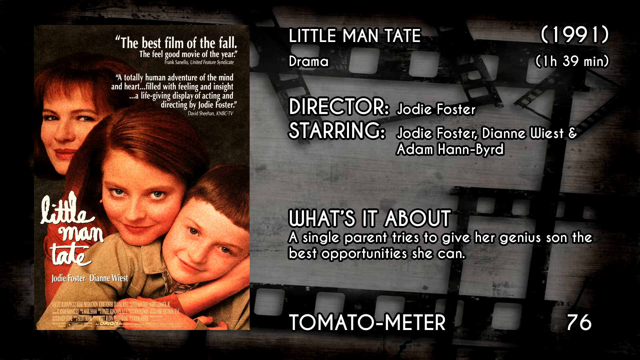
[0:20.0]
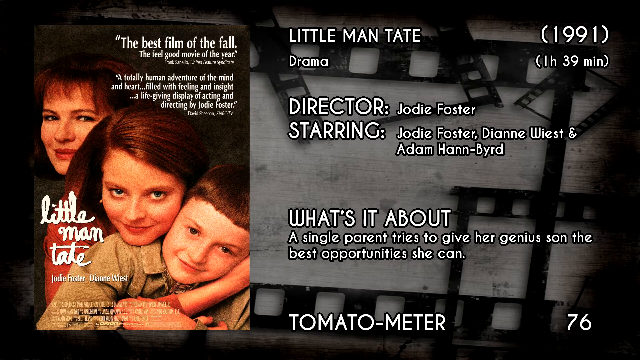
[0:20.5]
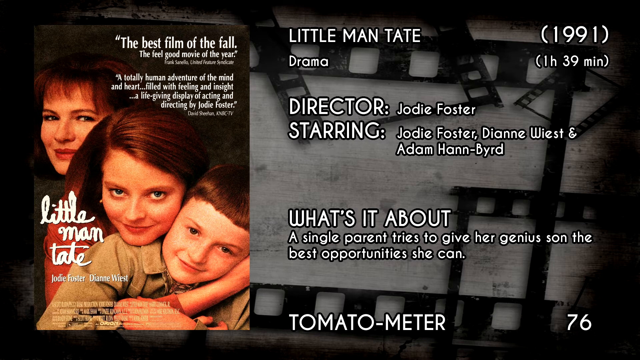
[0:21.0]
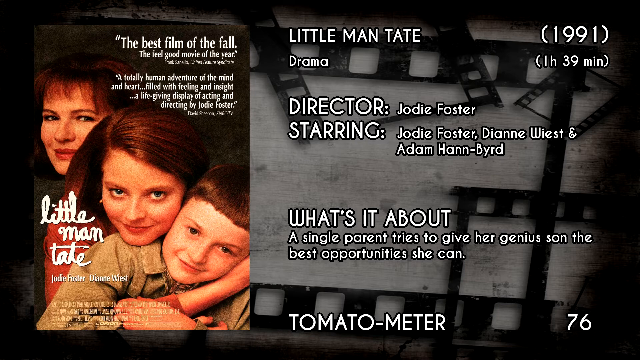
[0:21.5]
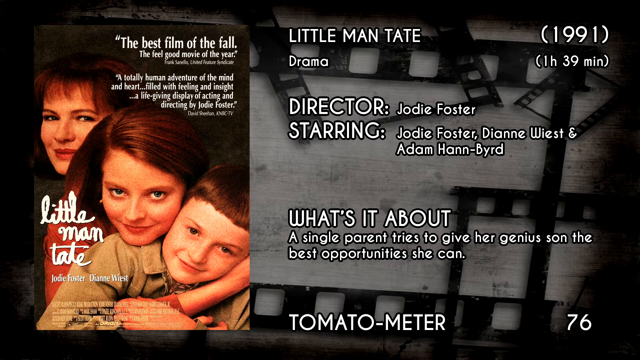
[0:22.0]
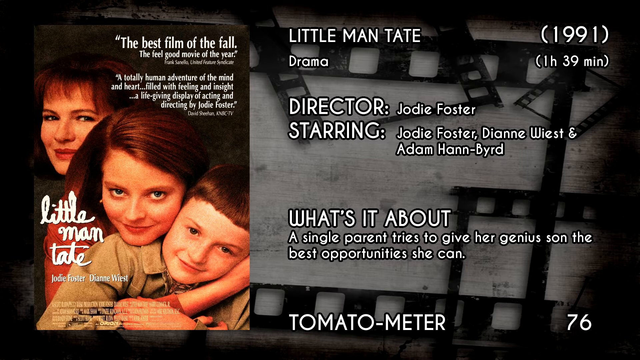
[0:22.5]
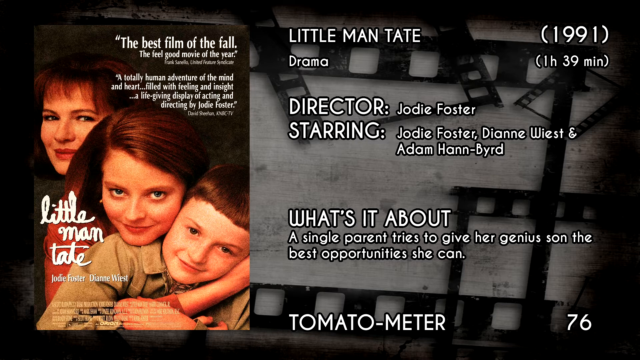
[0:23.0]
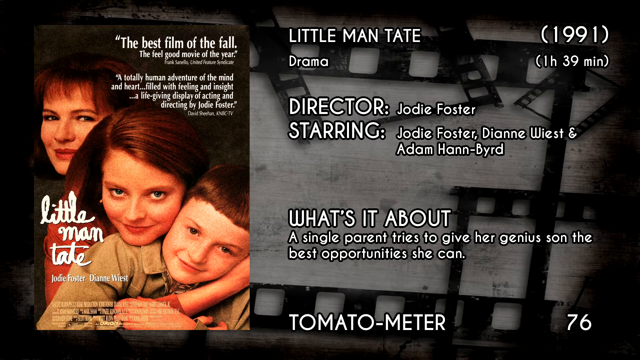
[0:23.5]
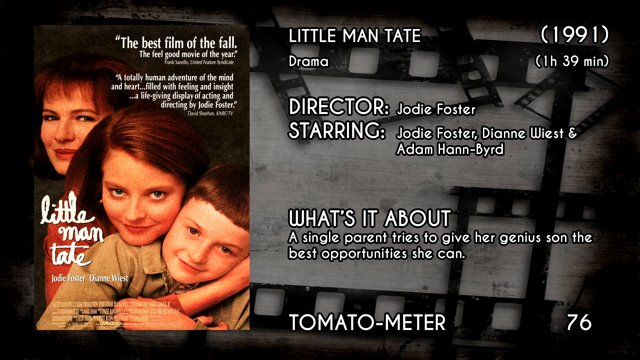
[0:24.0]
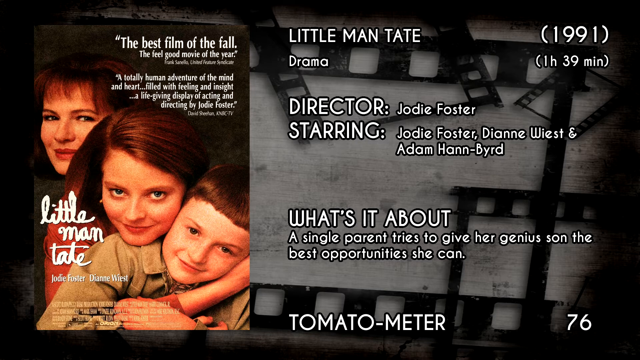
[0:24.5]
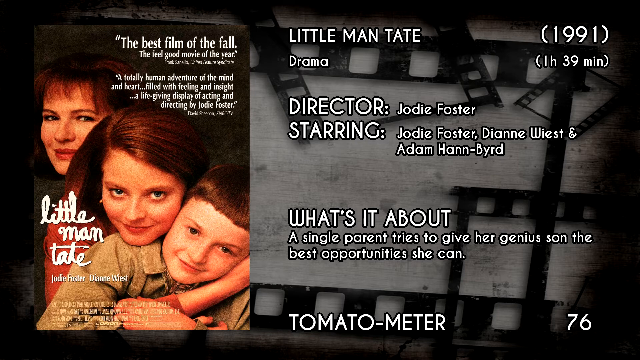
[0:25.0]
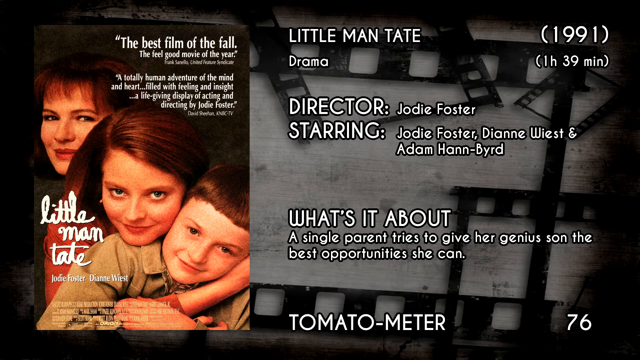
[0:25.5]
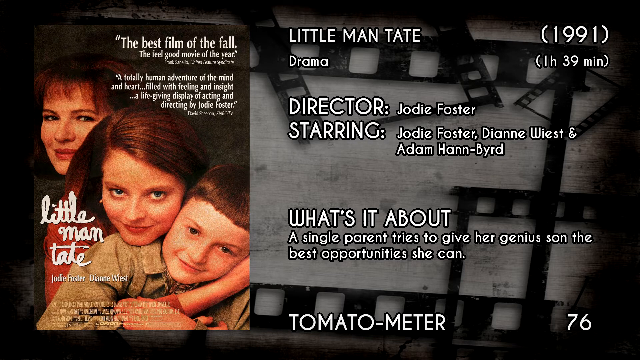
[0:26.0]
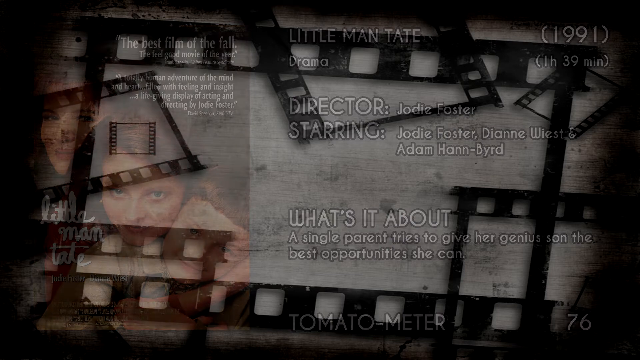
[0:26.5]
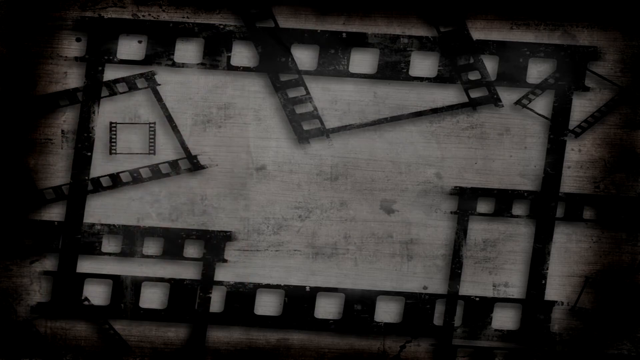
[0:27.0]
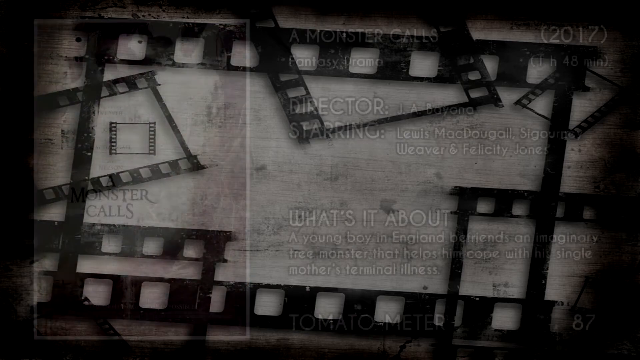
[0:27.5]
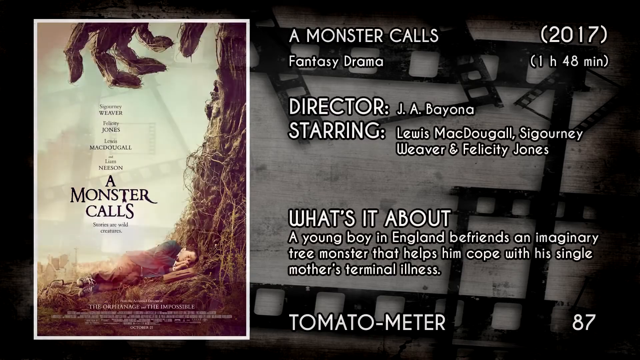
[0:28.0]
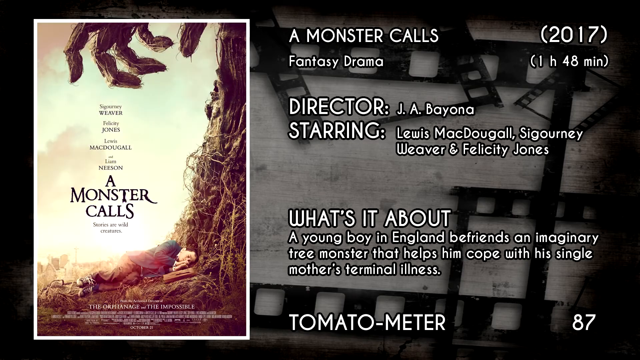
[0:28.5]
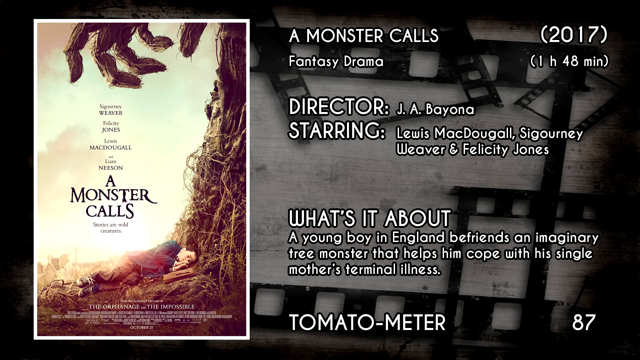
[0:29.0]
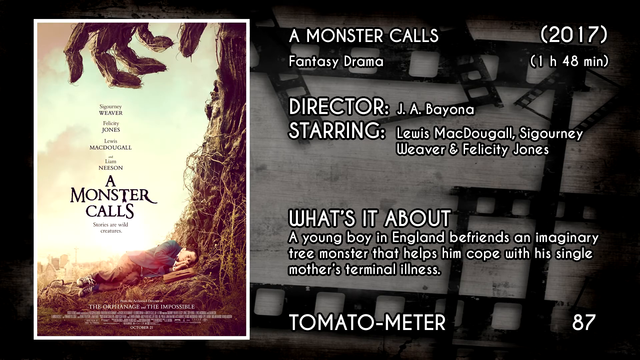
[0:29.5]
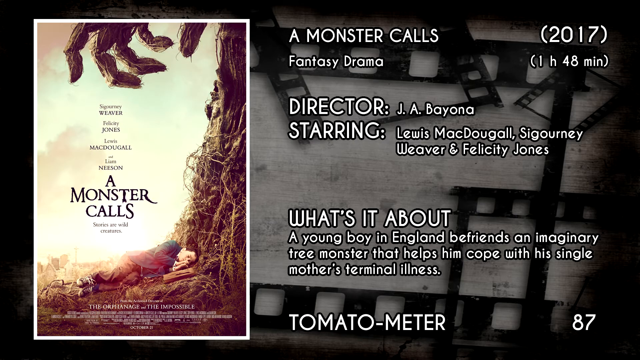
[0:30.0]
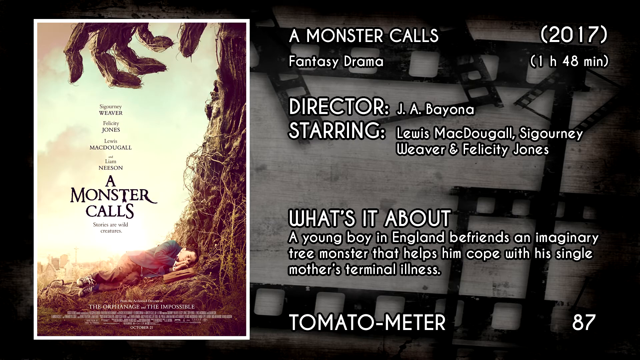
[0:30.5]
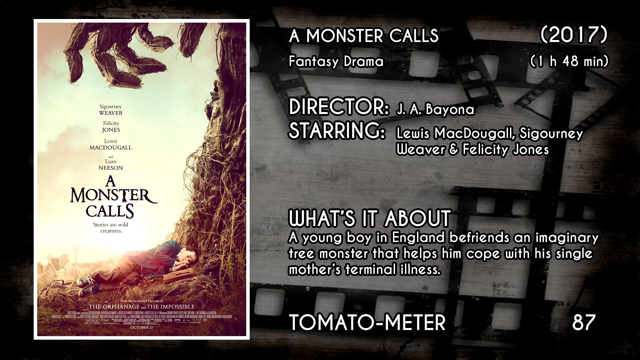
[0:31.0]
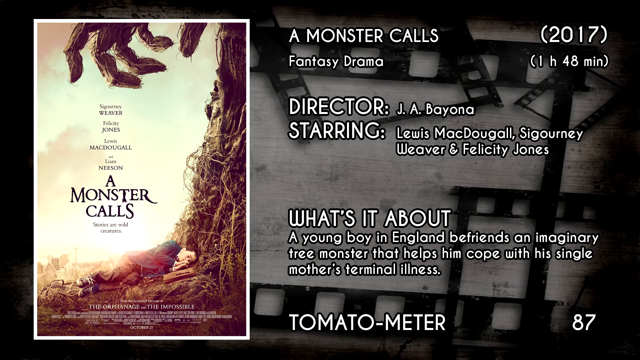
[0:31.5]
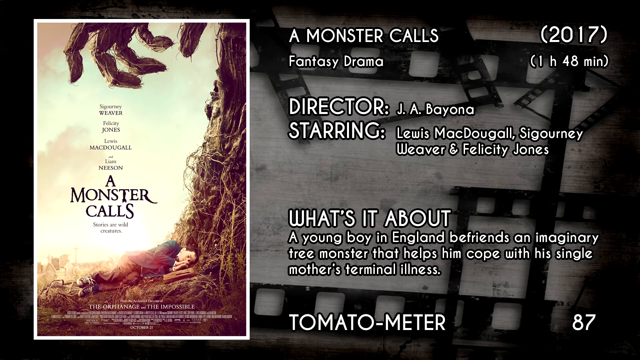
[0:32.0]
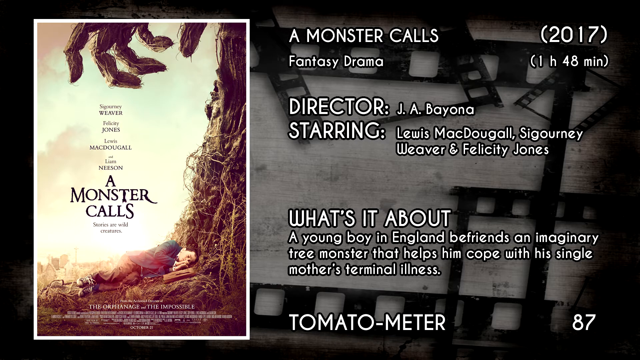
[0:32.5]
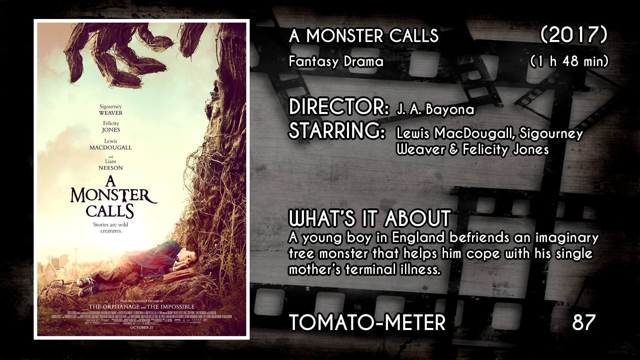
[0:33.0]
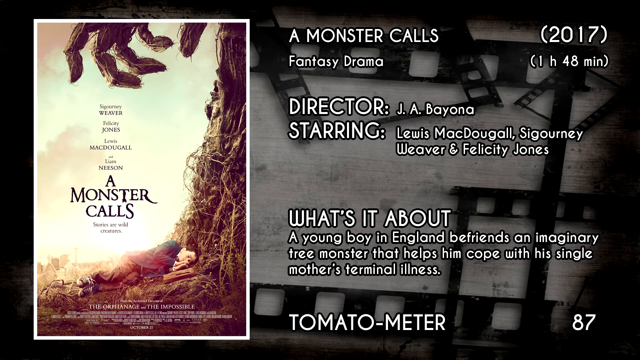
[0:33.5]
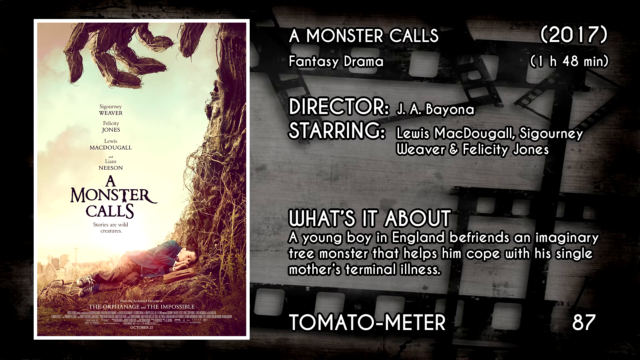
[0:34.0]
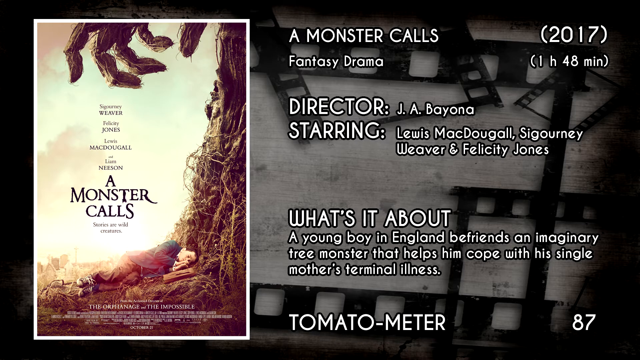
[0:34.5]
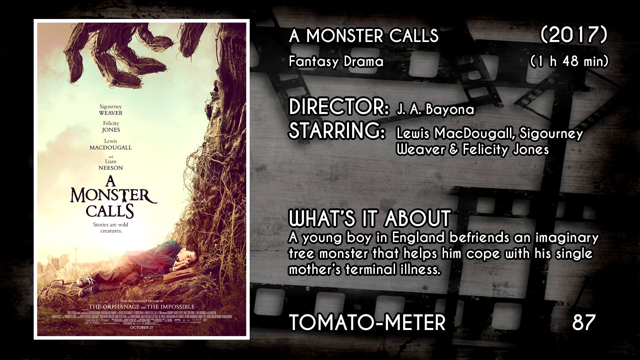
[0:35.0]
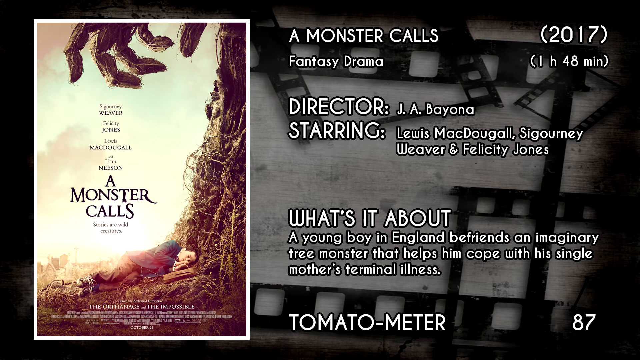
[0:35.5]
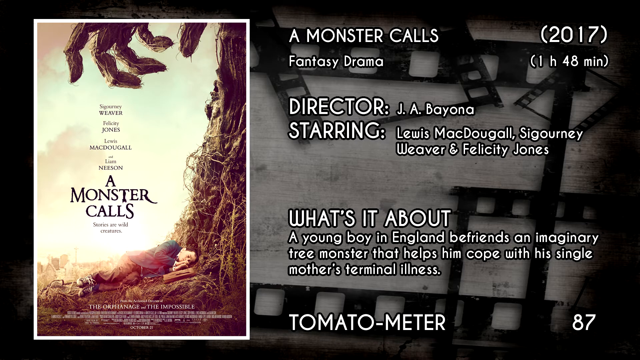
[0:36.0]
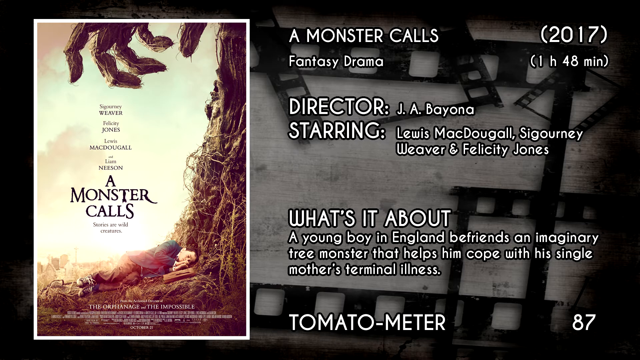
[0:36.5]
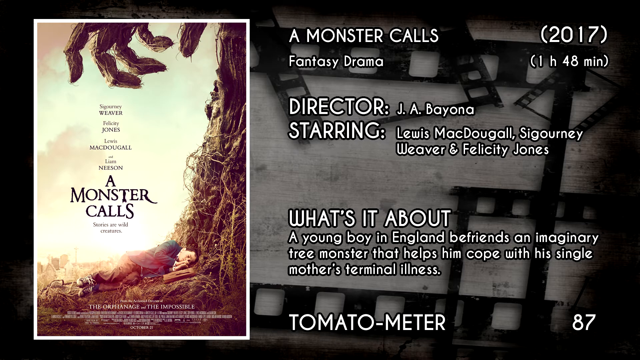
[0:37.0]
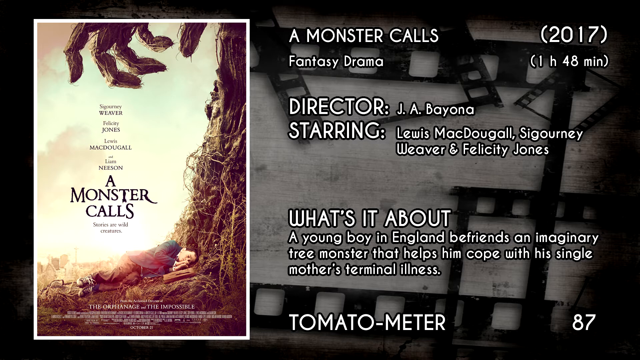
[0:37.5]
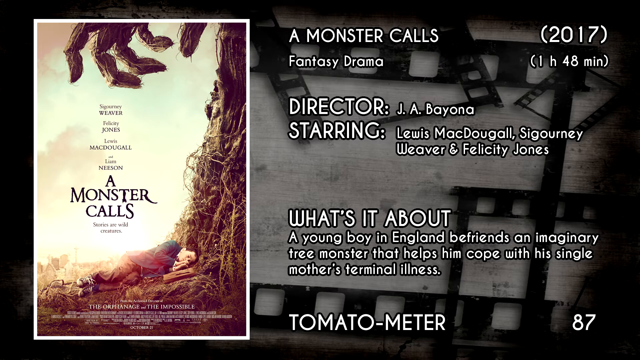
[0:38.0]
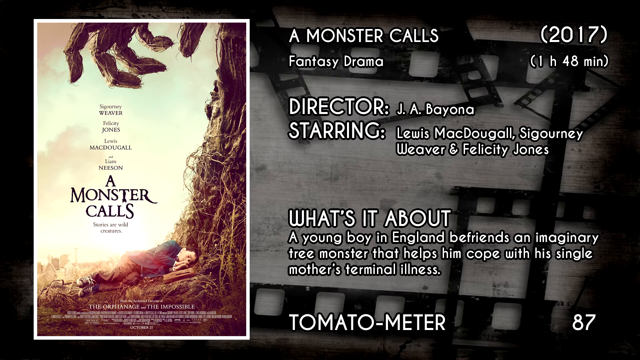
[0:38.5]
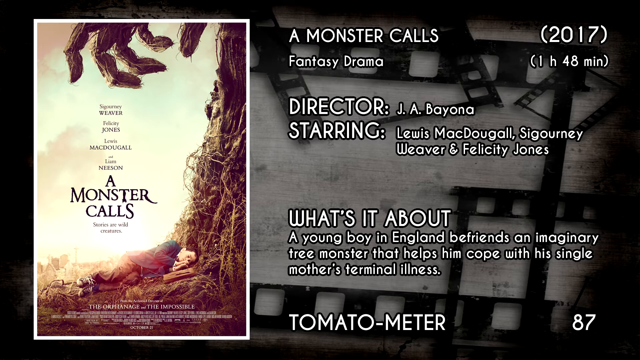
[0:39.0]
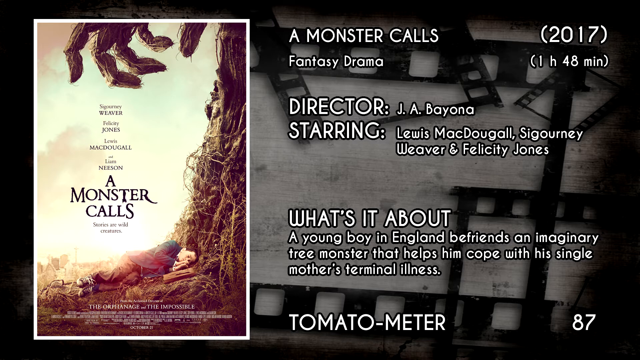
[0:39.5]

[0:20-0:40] The next movie is A Monster Calls, a fantasy drama. Its cover shows a hand that is not a real hand, apparently trying to pull up a man who is lying on the ground asleep. He looks desperate, as if he has nowhere to go. The movie is listed as released in 2017 and 1 hour 18 minutes long, directed by J. A. Viona, and starring Lewis Macdonald, Sigene Weaver and Felicity Jones. A description says it is about a young boy in England who befriends an imaginary tree monster that helps him cope with his single mother's terminal illness, which suggests the hand on the cover belongs to the tree monster.